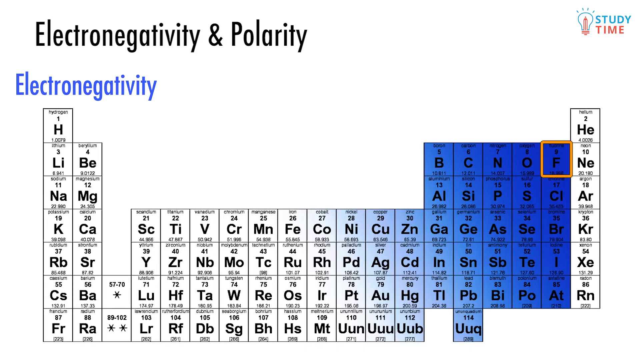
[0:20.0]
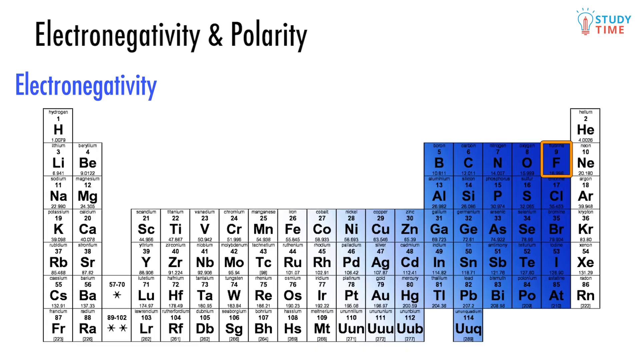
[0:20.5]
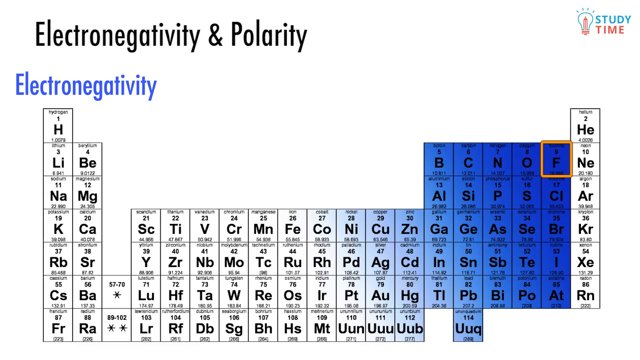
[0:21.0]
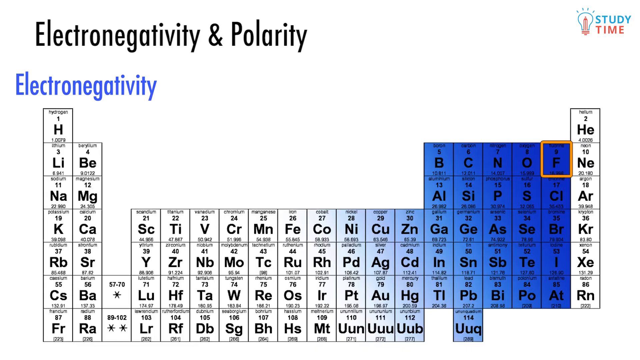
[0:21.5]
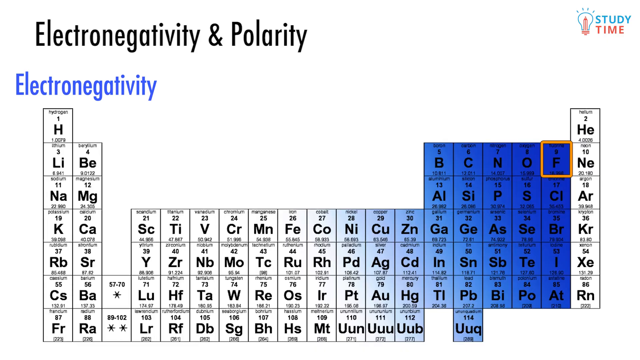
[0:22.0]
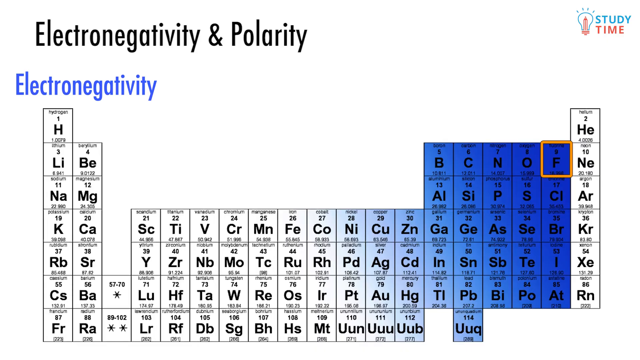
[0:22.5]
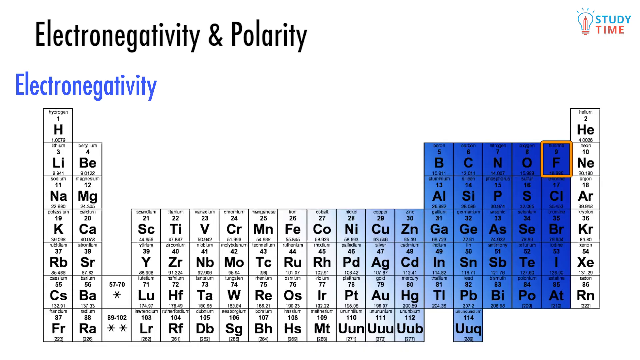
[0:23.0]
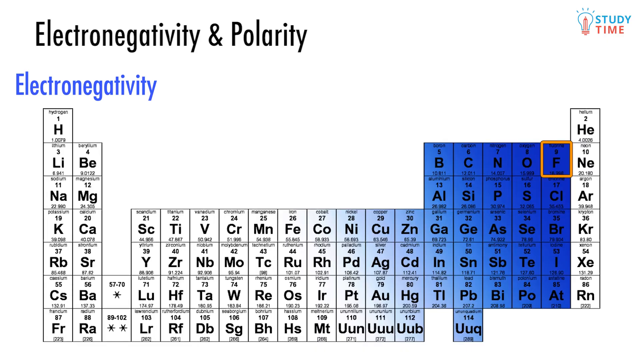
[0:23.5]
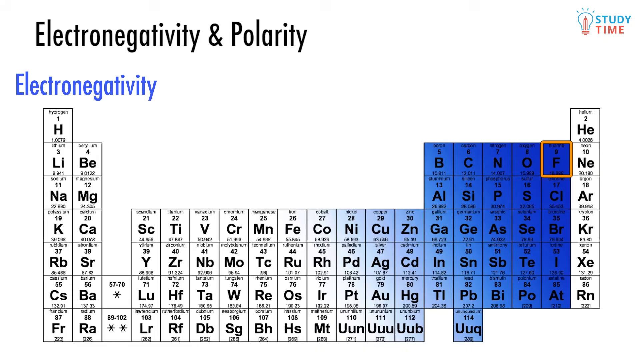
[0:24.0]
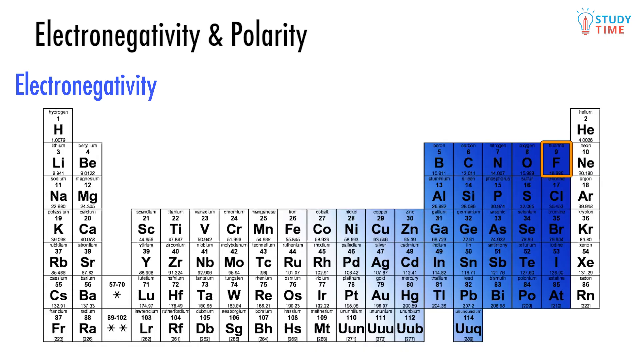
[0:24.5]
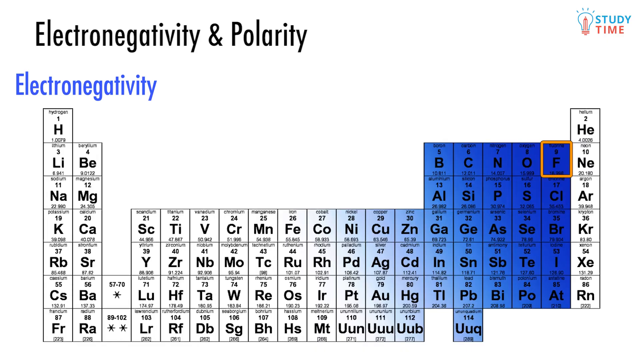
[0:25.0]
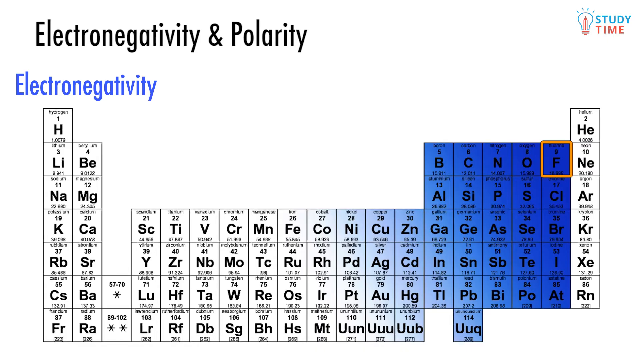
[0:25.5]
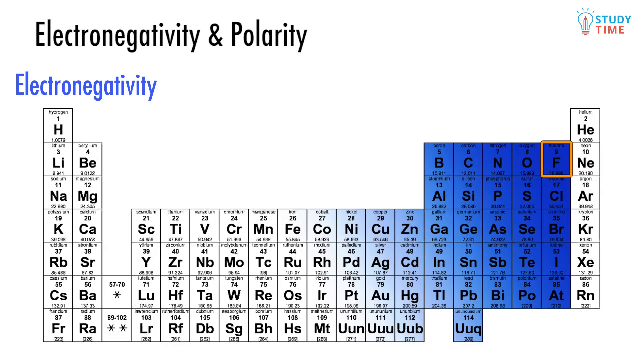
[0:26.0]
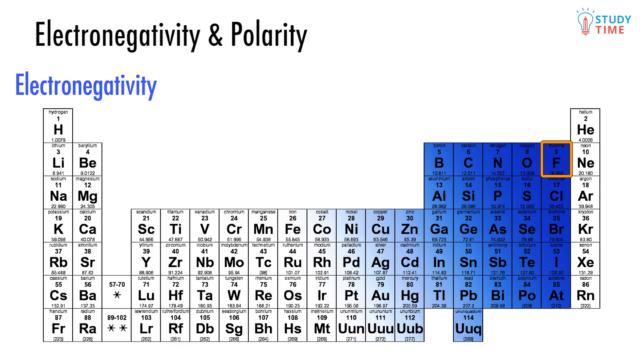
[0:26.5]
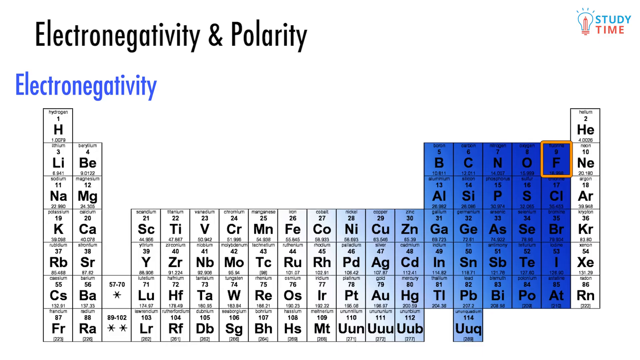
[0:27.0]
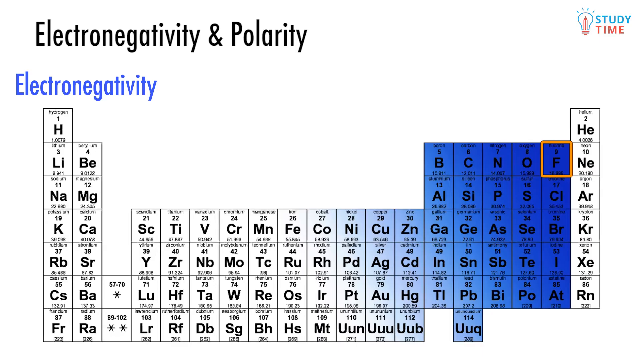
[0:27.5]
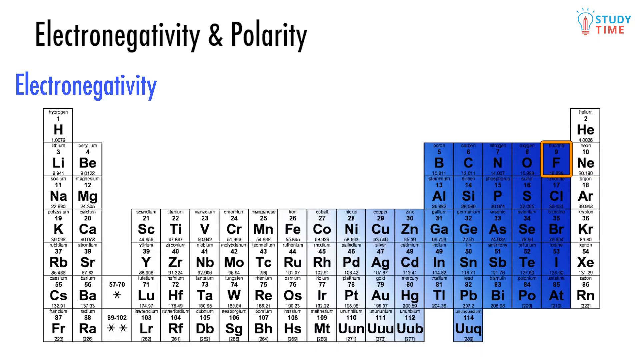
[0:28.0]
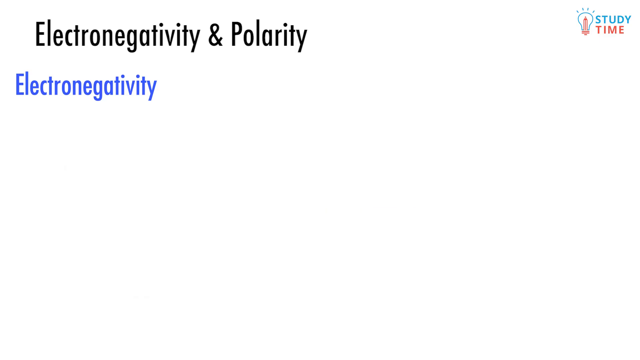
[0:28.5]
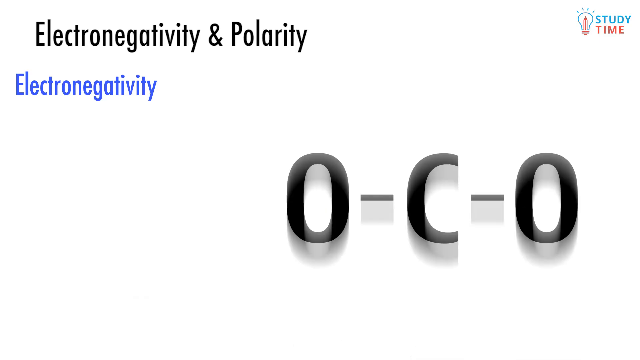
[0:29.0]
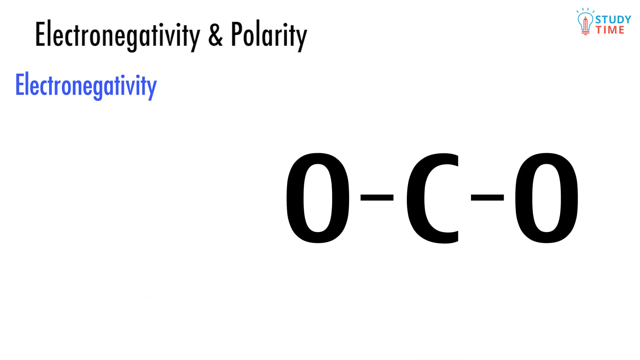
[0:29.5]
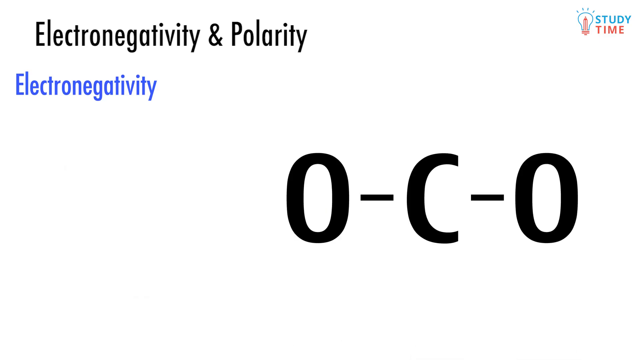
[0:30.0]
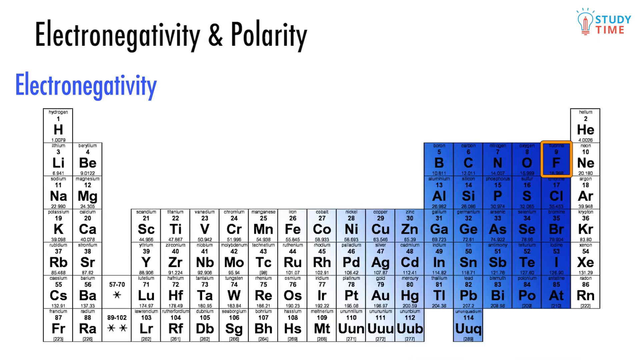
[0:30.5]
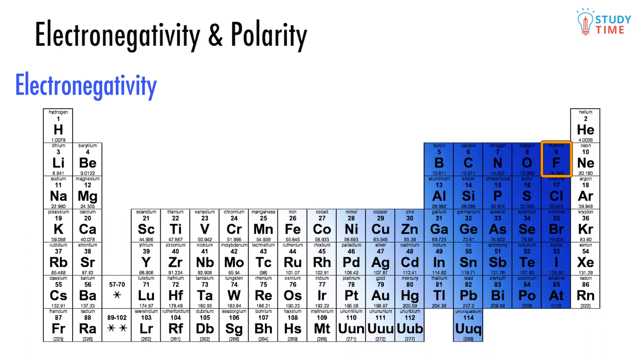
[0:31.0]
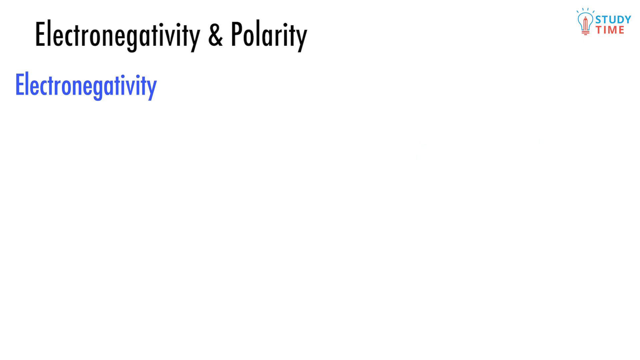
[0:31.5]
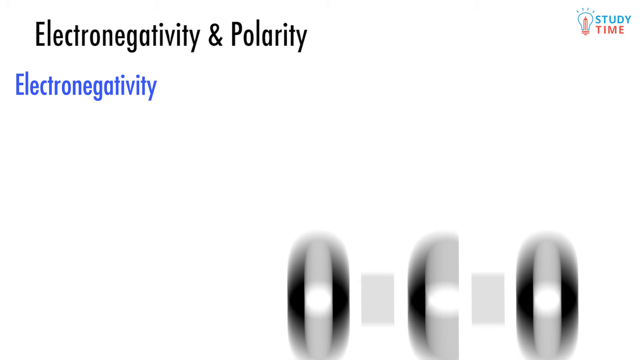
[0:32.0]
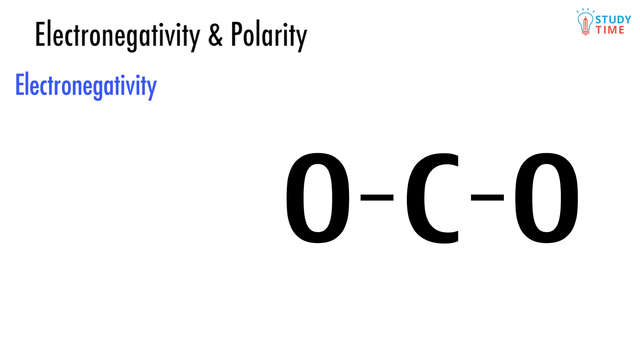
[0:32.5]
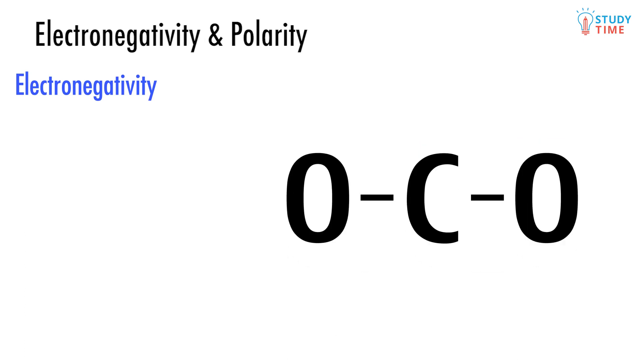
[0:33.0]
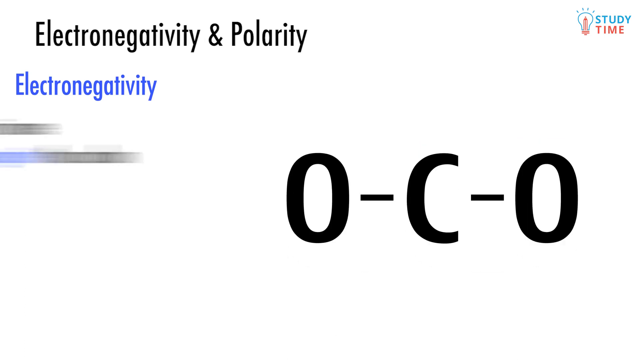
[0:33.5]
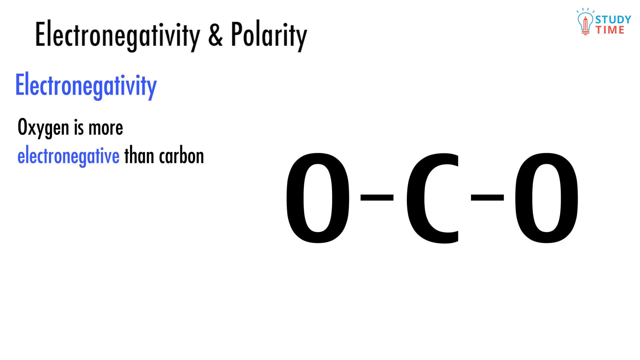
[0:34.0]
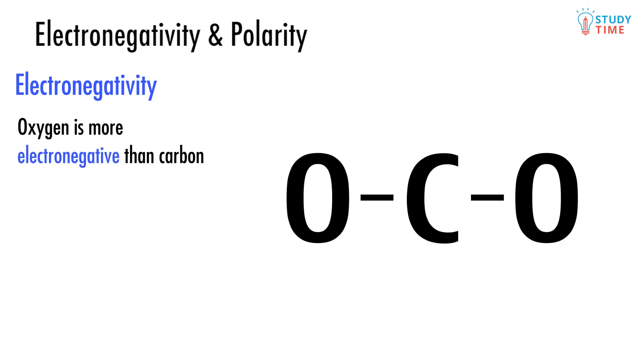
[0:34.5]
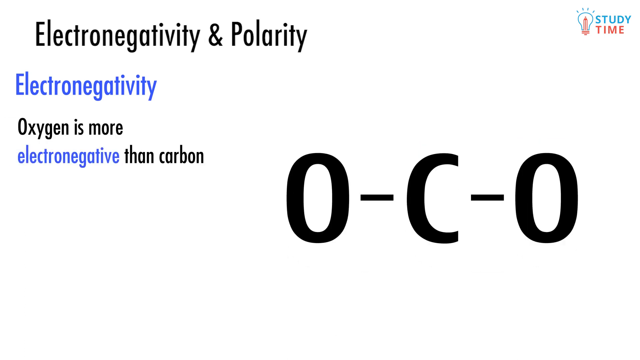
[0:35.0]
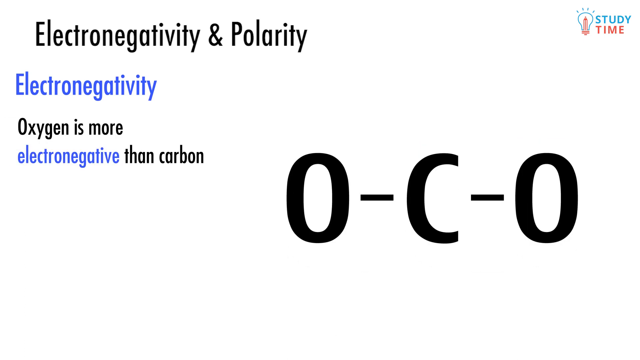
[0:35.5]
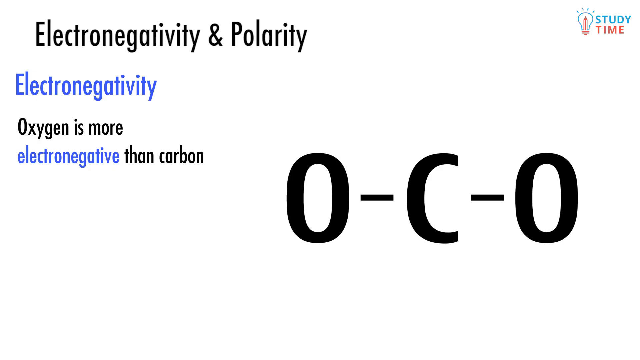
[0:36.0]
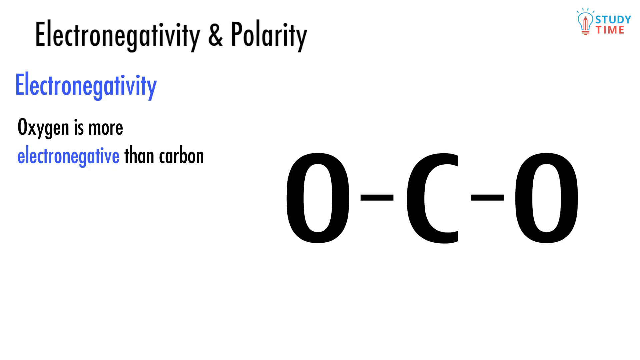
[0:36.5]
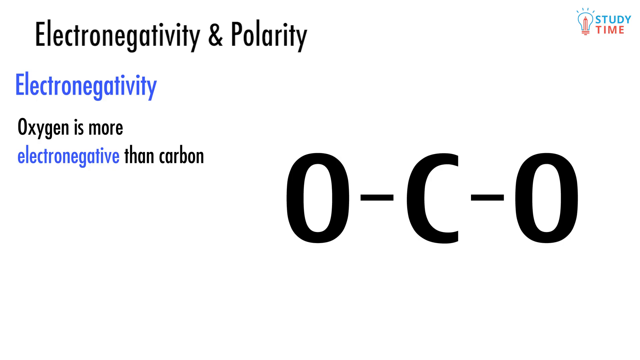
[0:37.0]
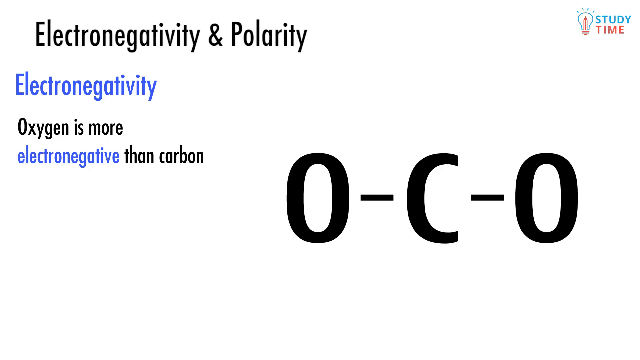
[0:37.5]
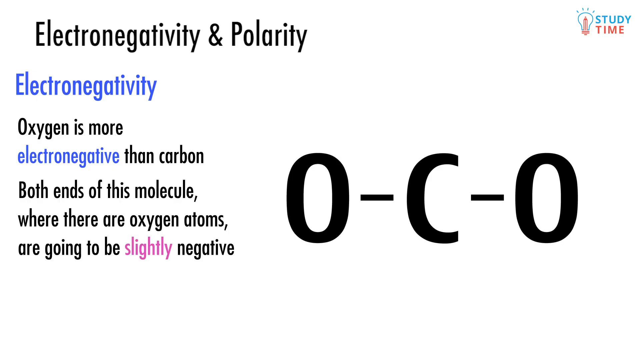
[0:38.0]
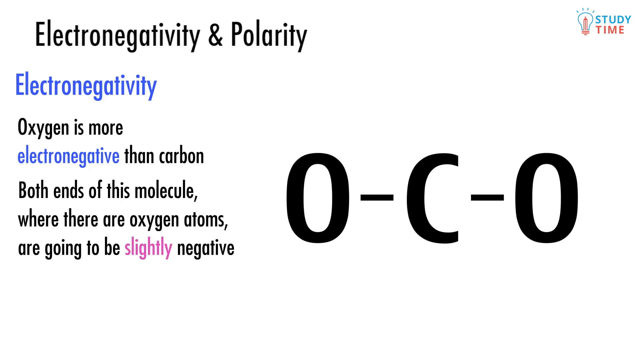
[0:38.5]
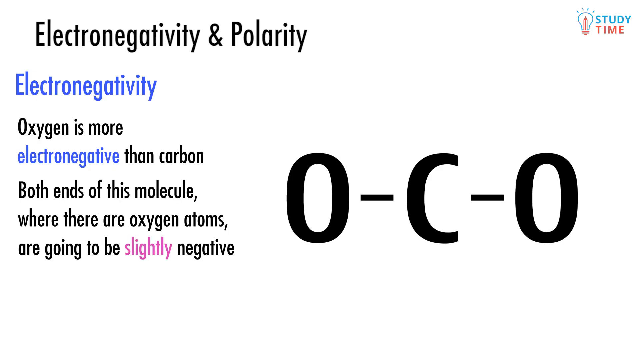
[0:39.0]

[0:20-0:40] The orange square stays in place, still highlighting the F element. The table shows a color variation across certain elements: toward the right, where the squared F element is, the color is a much darker blue, while not every element has a blue hue and some have only a partial blue hue. The video then cuts to a section showing what seems to be a combination of elements, under electronegativity. Text says "oxygen is more electronegative than carbon", and the molecule is shown apparently as O C O (oxygen, carbon, oxygen). Text also says "both ends of the molecule where there are oxygen atoms are going to be slightly negative".